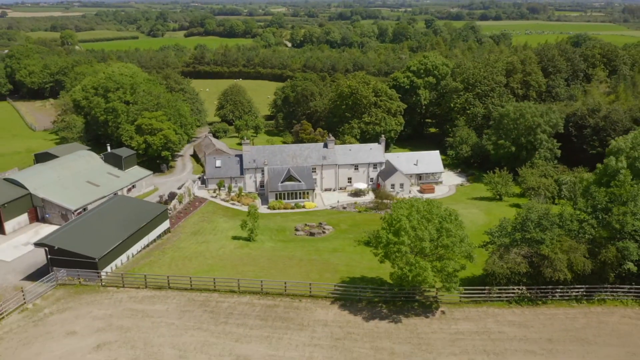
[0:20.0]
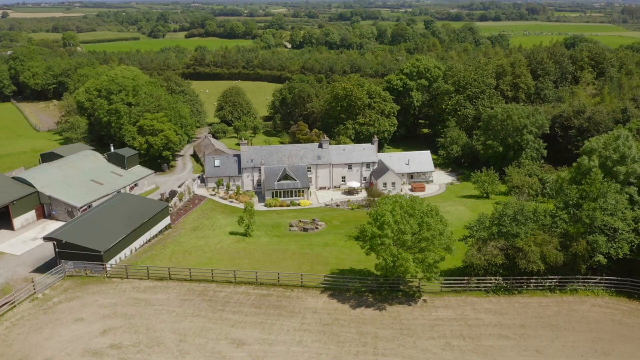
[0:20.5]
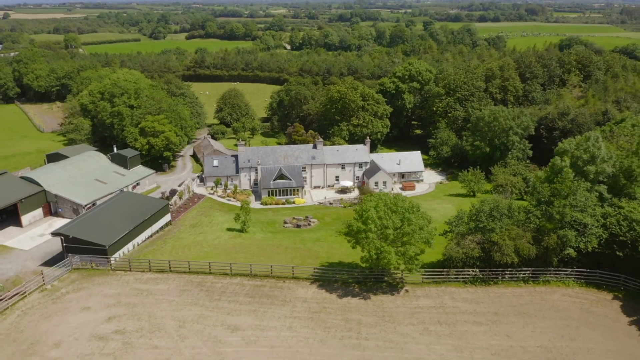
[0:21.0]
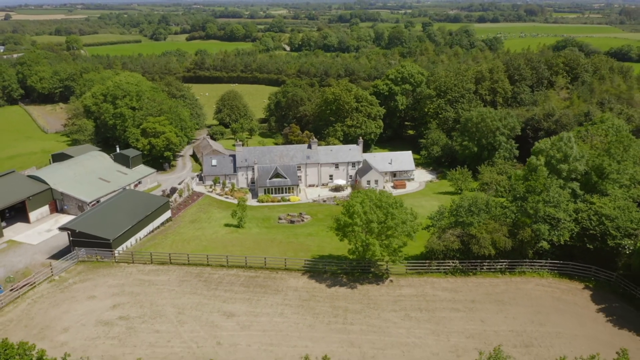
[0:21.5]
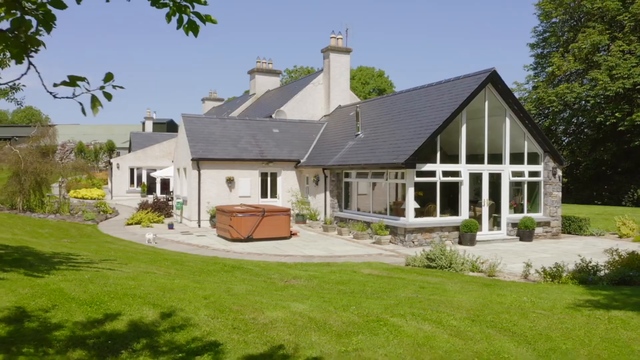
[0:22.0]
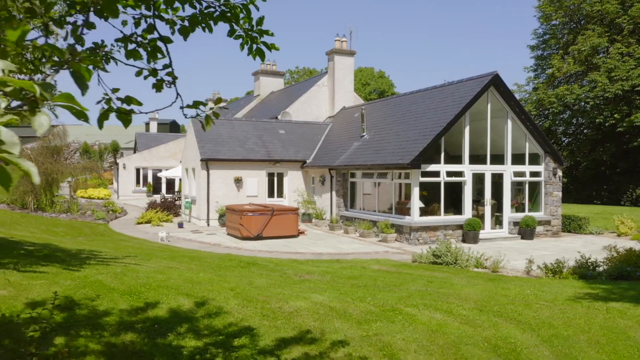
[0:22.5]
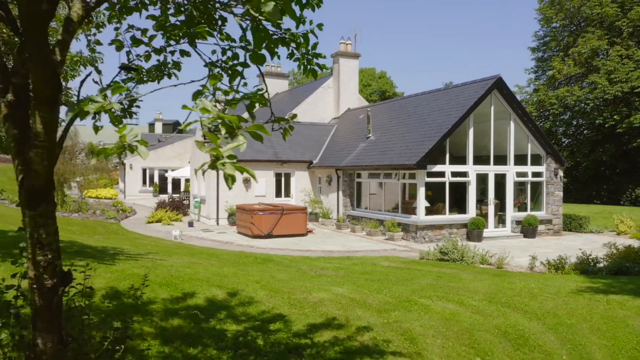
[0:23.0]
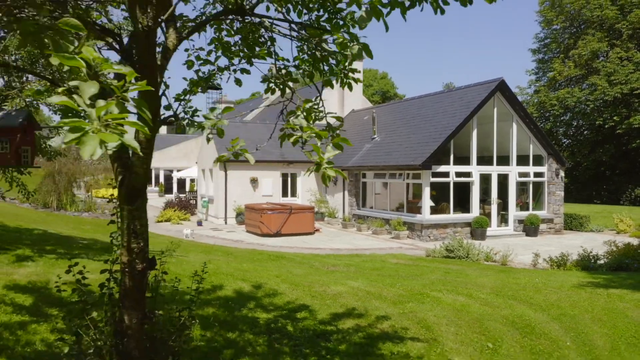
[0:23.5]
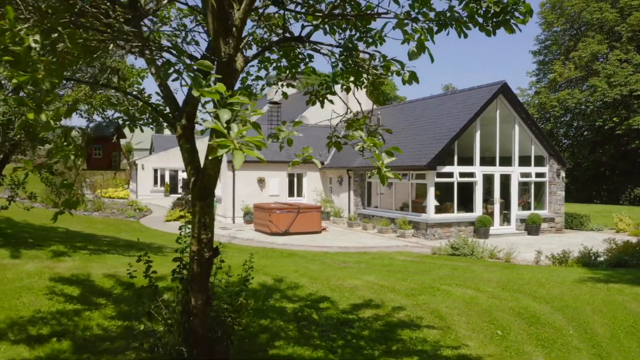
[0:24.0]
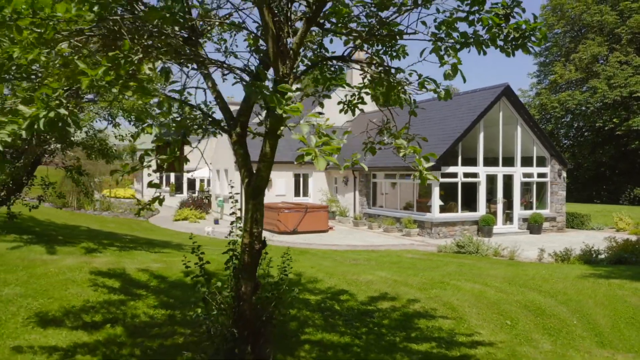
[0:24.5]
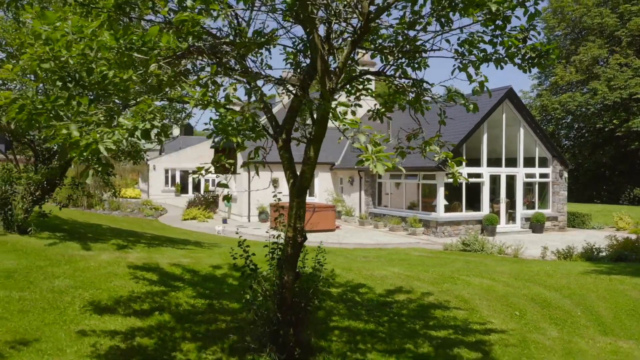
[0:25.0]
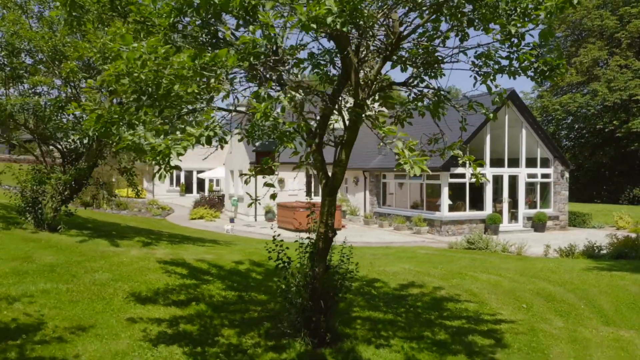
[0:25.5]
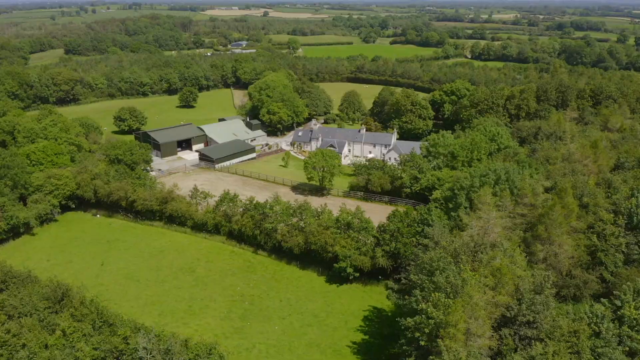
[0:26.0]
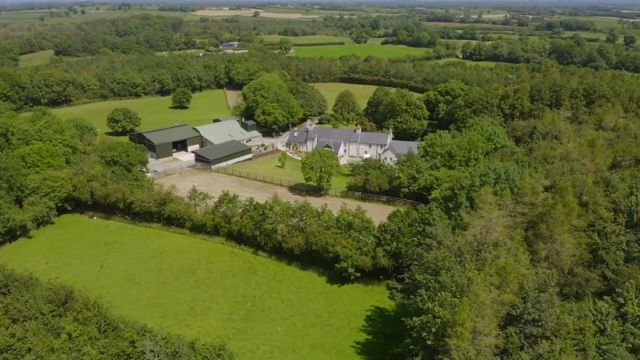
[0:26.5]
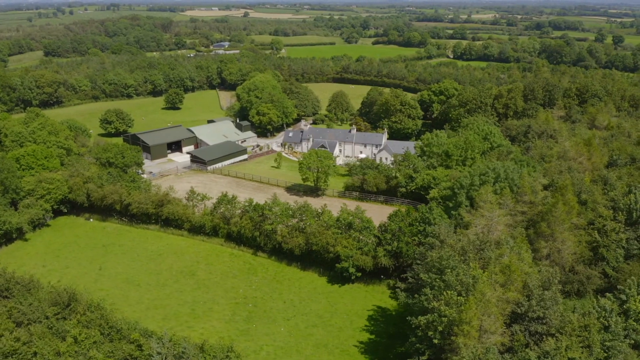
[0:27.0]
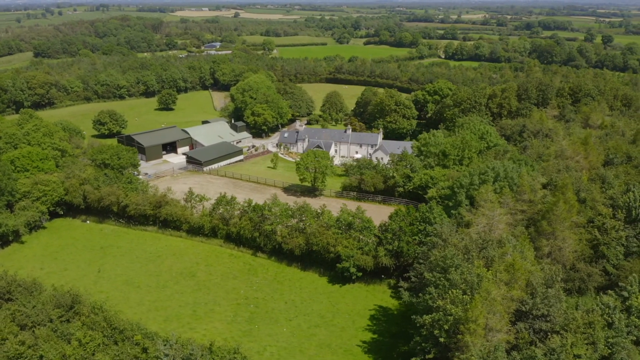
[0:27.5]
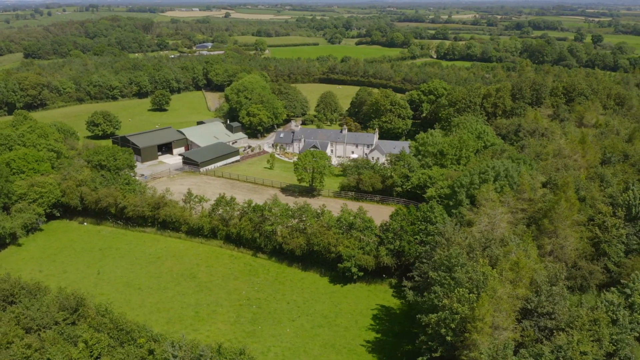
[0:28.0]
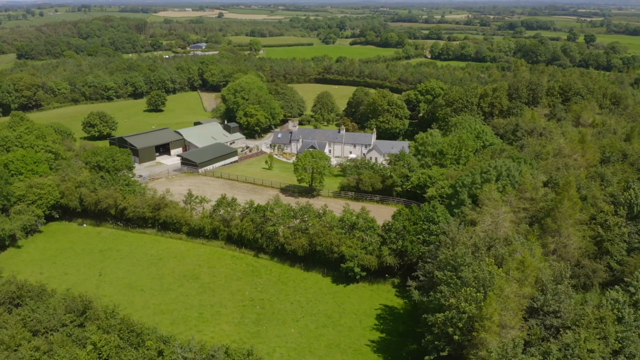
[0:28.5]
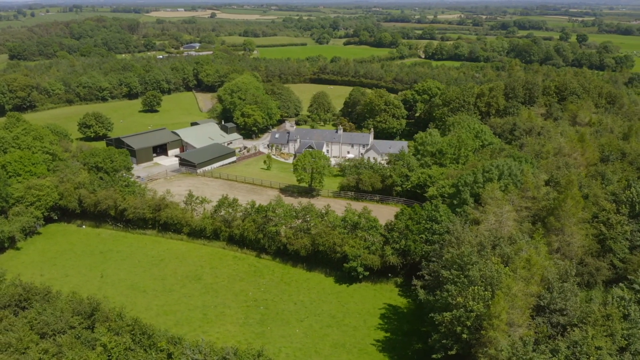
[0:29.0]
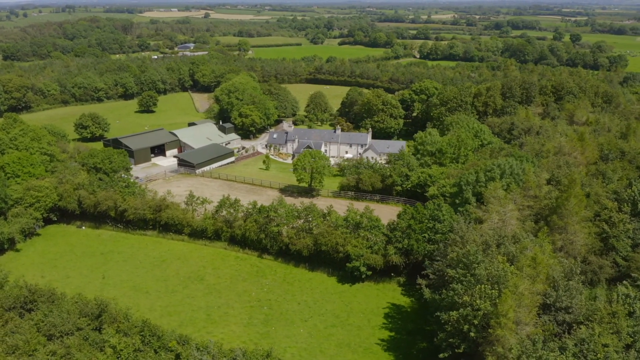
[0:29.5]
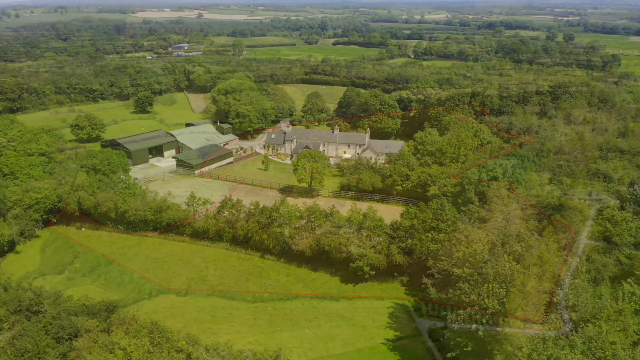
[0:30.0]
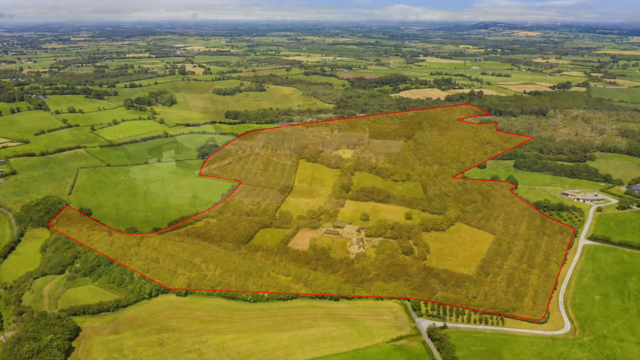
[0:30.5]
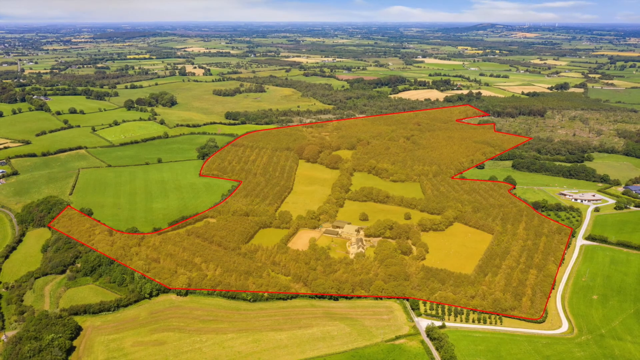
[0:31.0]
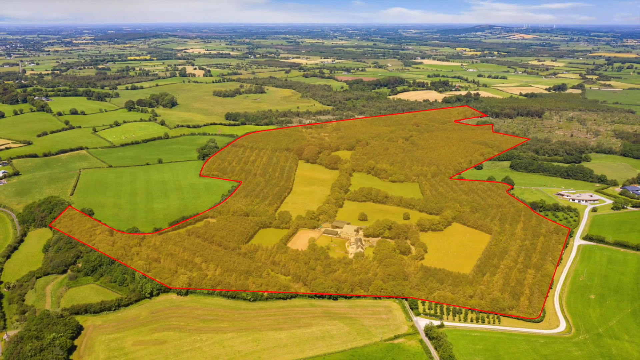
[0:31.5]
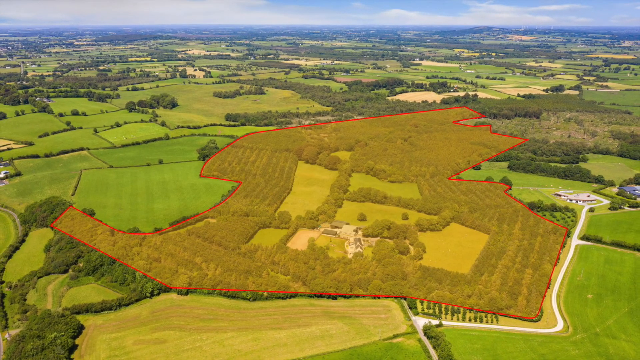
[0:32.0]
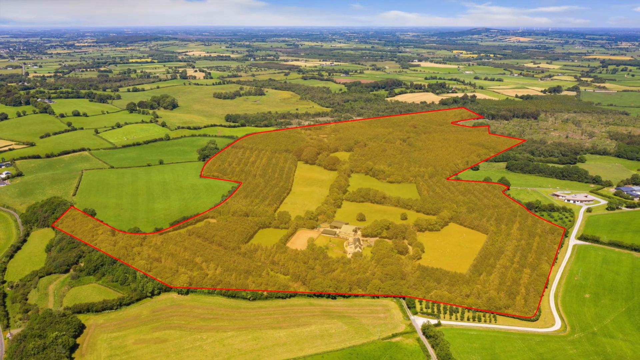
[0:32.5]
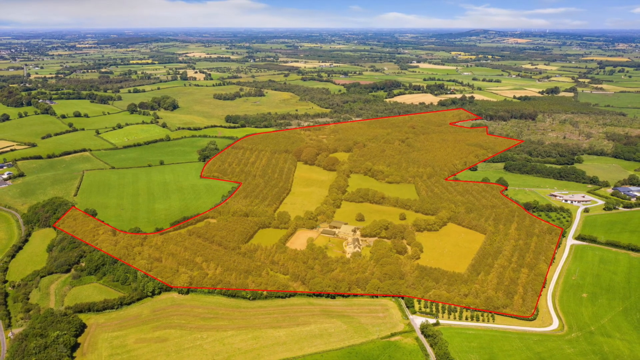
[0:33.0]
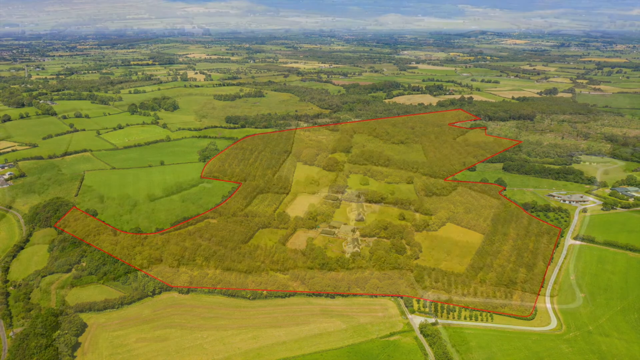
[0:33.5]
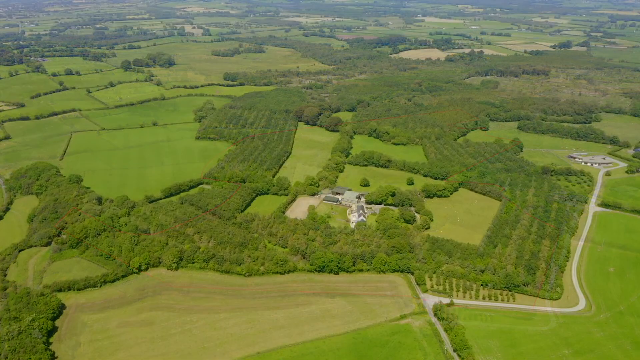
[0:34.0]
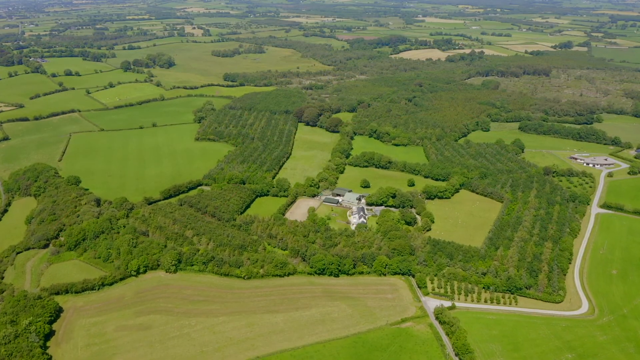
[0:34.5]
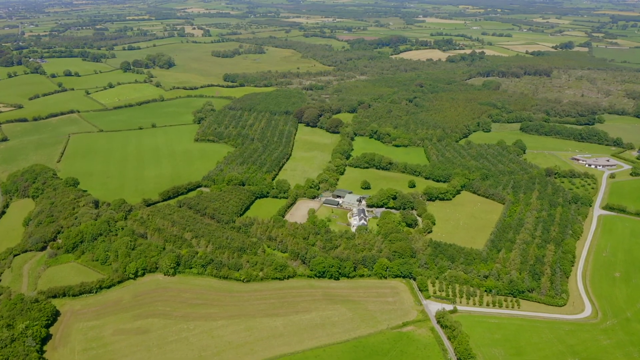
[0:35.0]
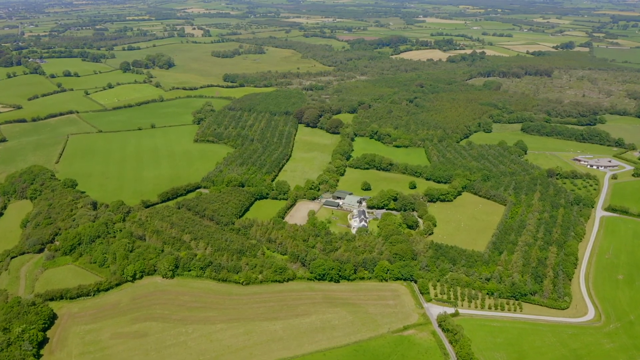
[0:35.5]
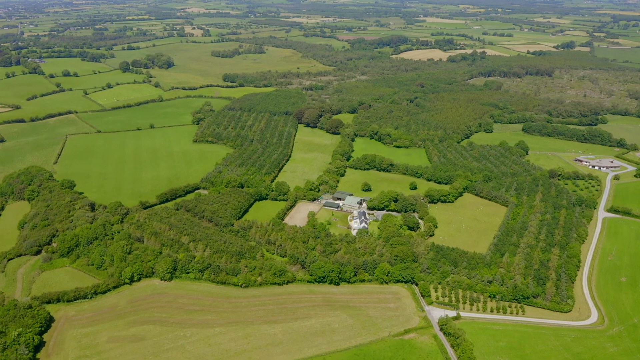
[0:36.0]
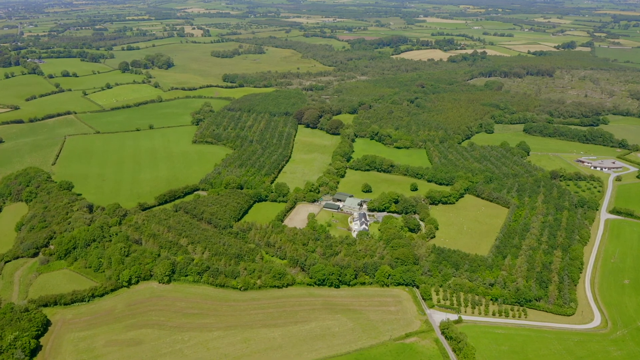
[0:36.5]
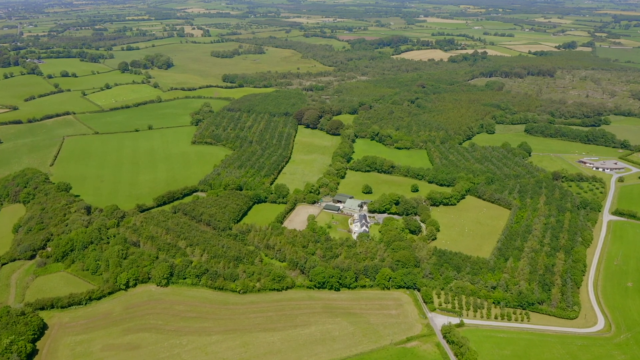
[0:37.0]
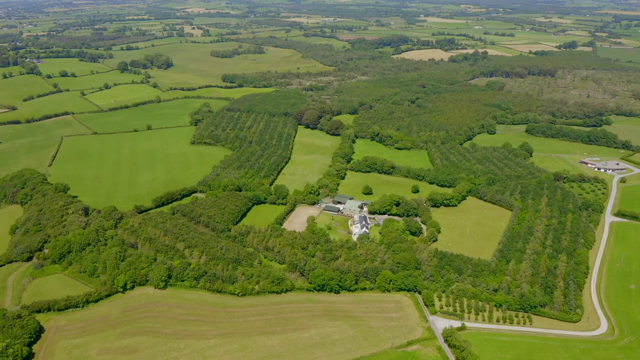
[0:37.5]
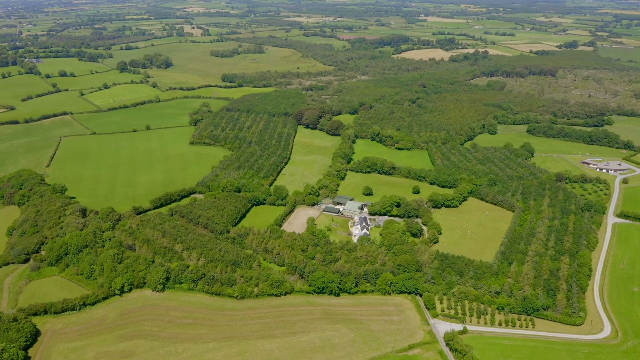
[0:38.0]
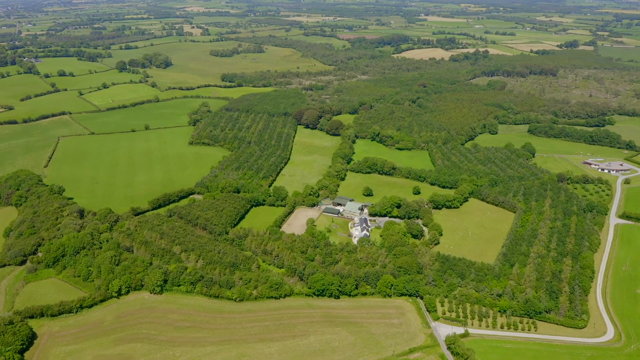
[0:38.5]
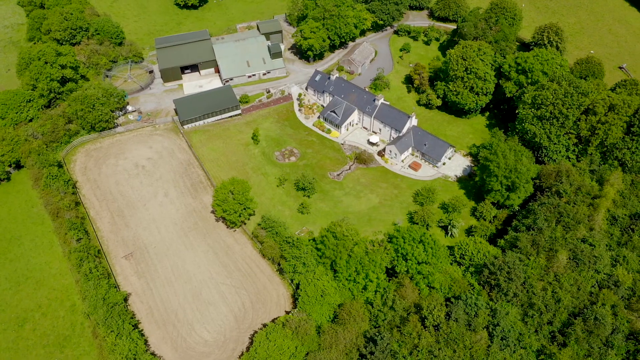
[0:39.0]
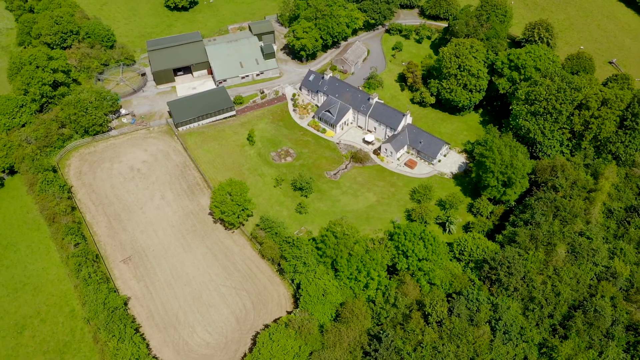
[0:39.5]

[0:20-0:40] The overhead shot of the house continues from the back, followed by a closer shot of the back of the house near a garden or greenhouse-like area. A brown box-like object is near it, perhaps some sort of drinking area or a storage container. A shot from further back shows the trees and lawn beyond the main house area, with many trees in the distance toward the back and the front, and many on the right and left as well. There appears to be another home in the distance to the back left, seemingly another building with a lawn in front of it. The video cuts to another shot in which this other building is visible further out to the right, while the main house being sold is in the middle bottom area of the view. A red outline surrounds the entire property, marking the land that belongs to the house. The outline has an unusual shape, not a rectangle but like several different shapes mixed together. It covers many of the trees around the house but not all of them: on the left side some trees are left out; down the right it covers many trees but stops as it gets closer to the other house; above the house it seems to cover much of the top and then extends toward the right, while the area to the left is not included.